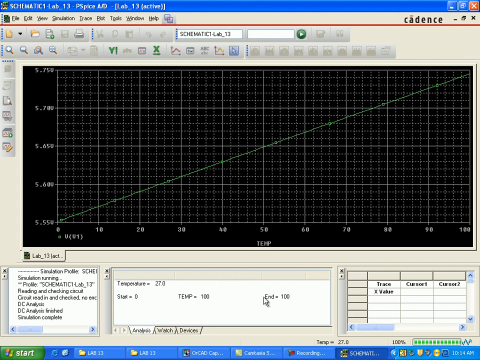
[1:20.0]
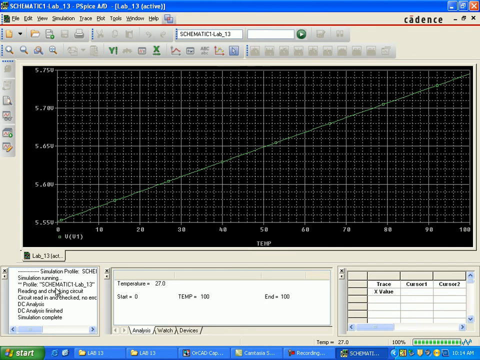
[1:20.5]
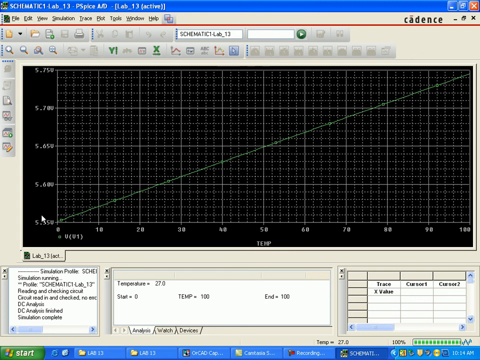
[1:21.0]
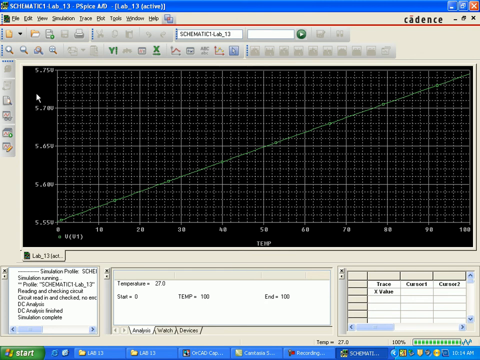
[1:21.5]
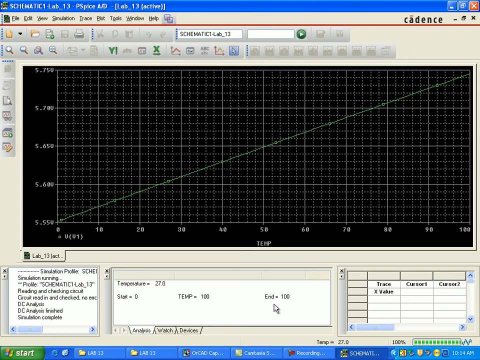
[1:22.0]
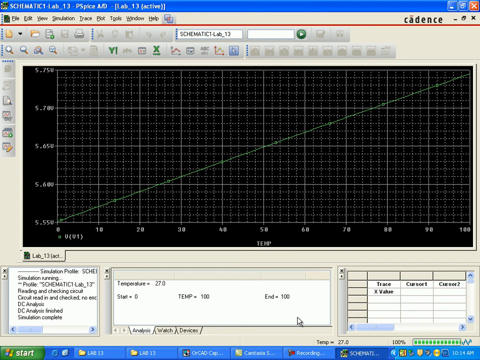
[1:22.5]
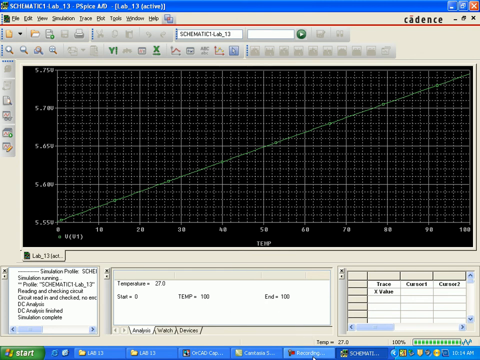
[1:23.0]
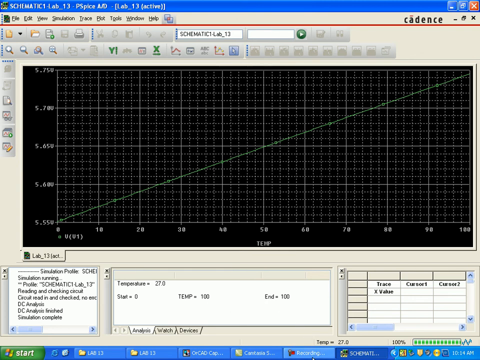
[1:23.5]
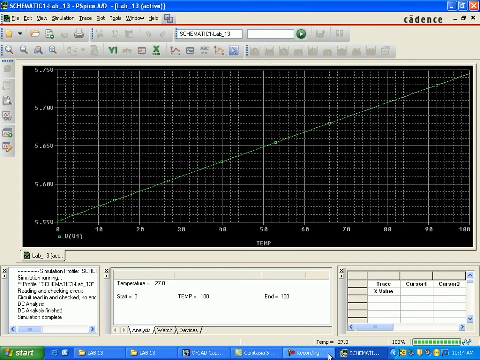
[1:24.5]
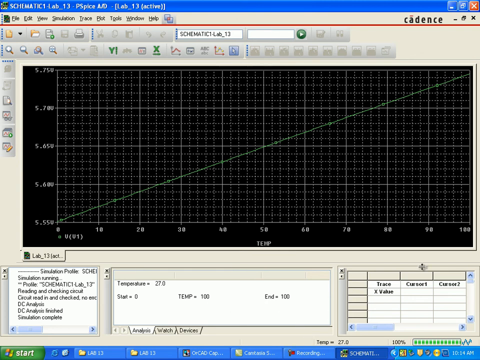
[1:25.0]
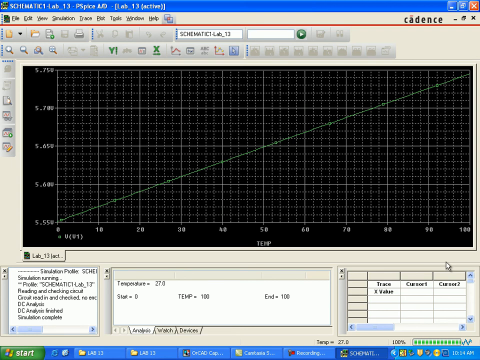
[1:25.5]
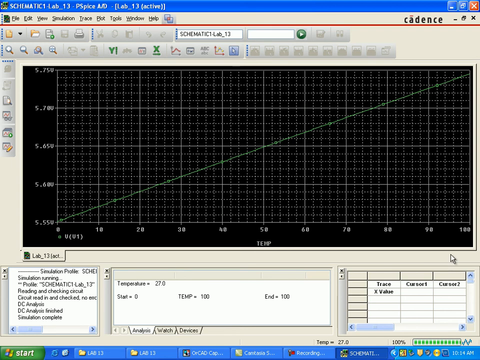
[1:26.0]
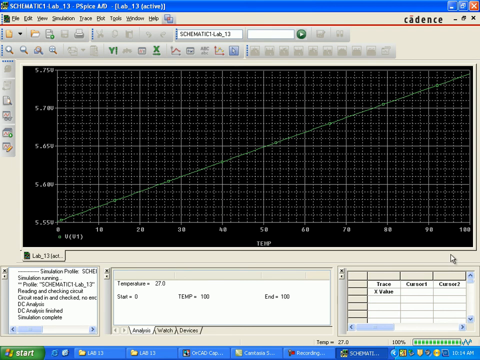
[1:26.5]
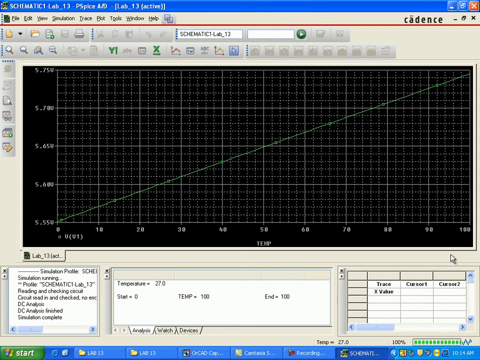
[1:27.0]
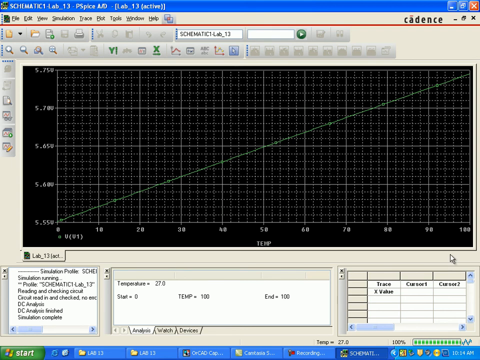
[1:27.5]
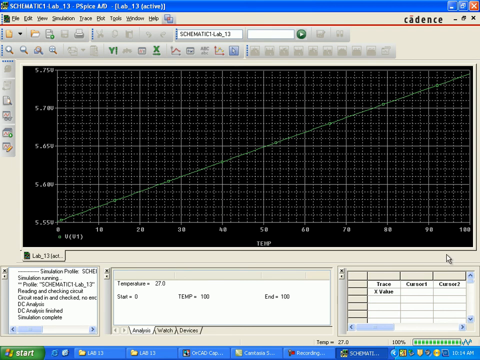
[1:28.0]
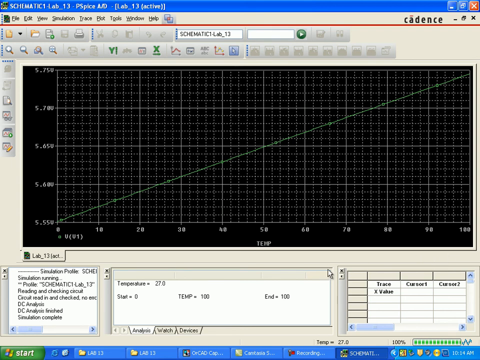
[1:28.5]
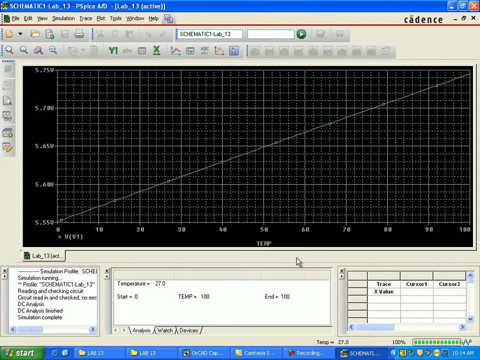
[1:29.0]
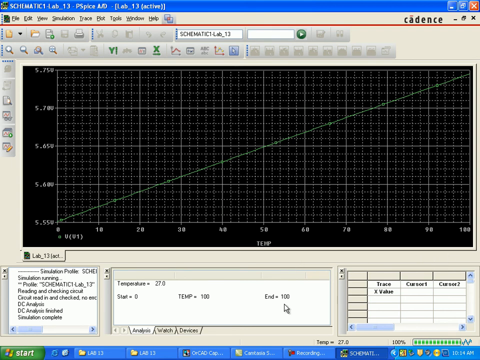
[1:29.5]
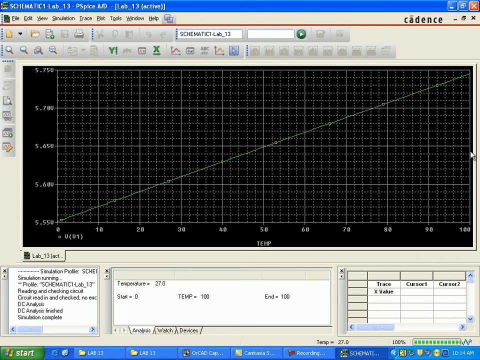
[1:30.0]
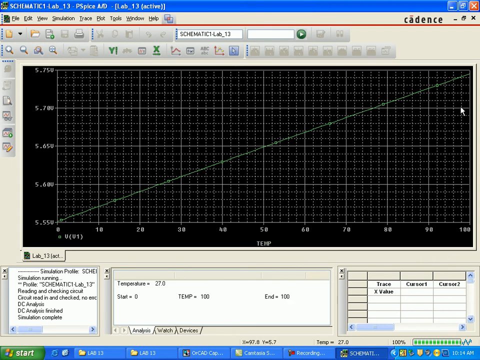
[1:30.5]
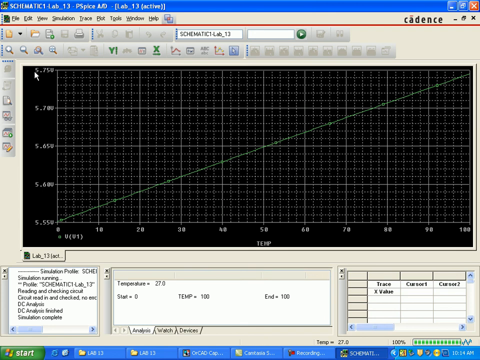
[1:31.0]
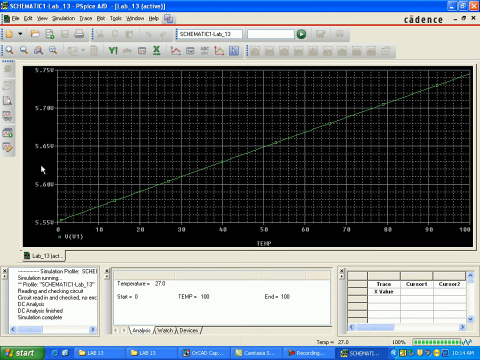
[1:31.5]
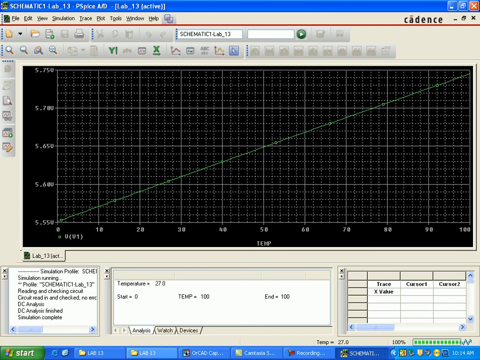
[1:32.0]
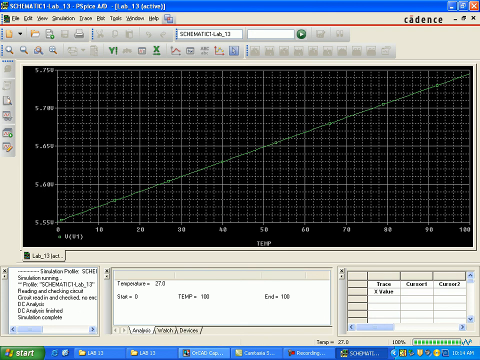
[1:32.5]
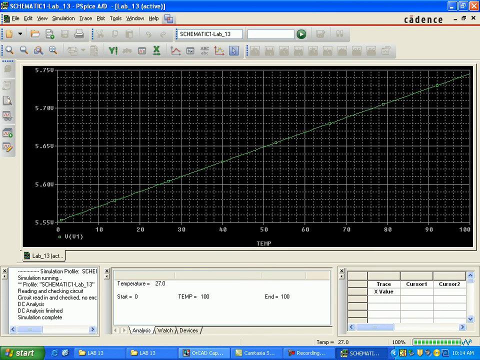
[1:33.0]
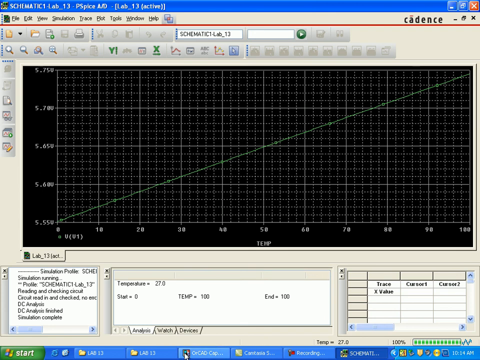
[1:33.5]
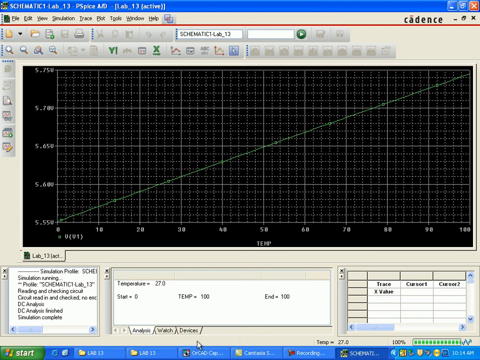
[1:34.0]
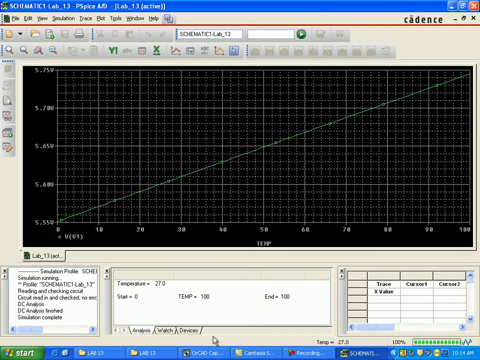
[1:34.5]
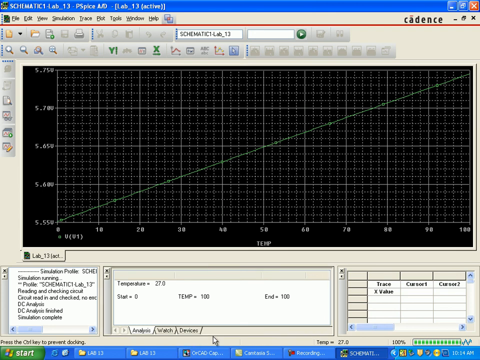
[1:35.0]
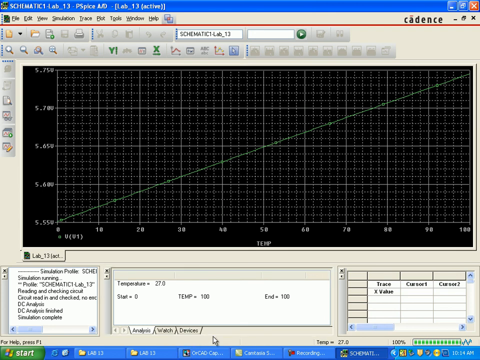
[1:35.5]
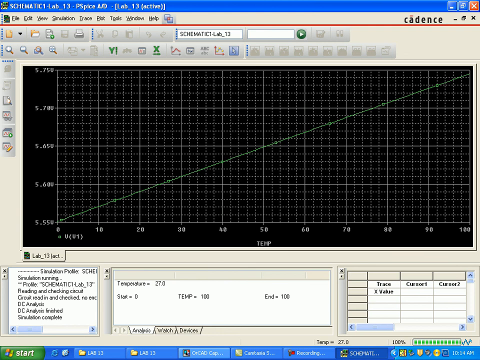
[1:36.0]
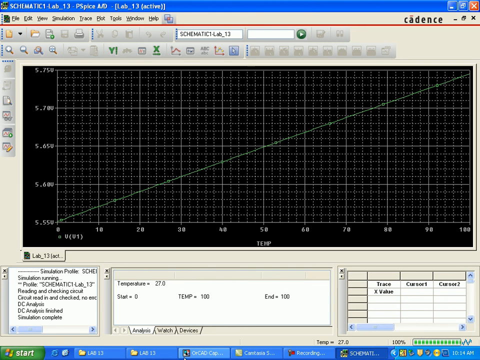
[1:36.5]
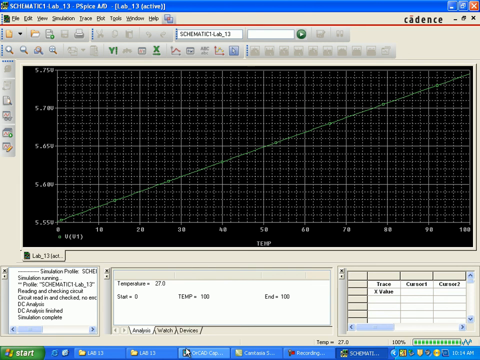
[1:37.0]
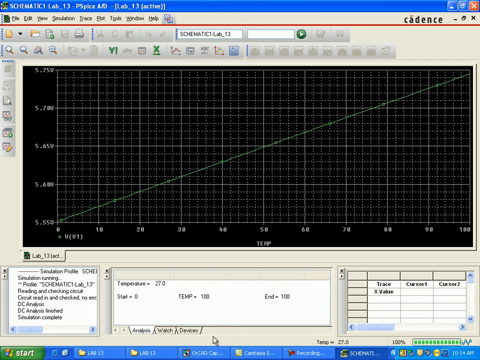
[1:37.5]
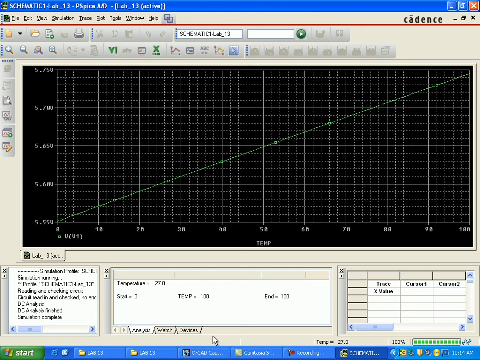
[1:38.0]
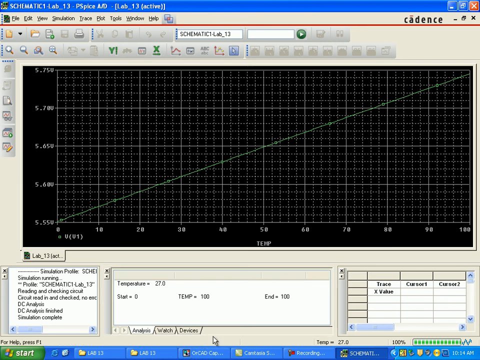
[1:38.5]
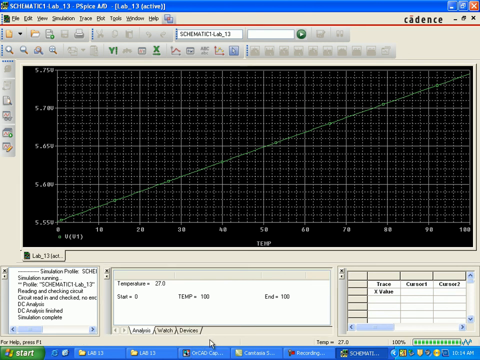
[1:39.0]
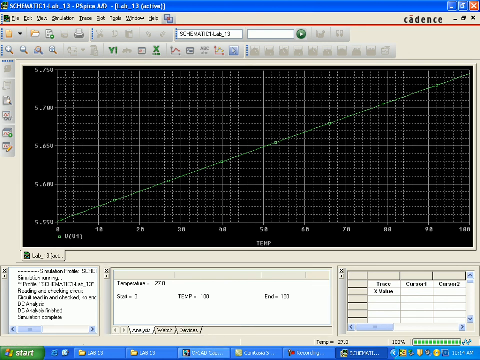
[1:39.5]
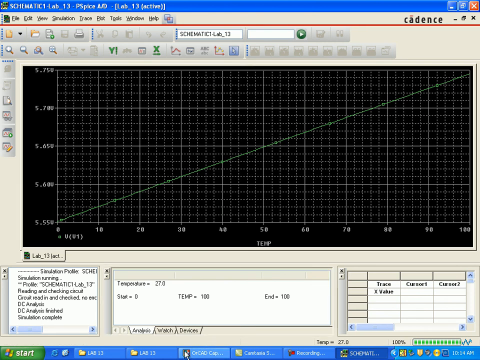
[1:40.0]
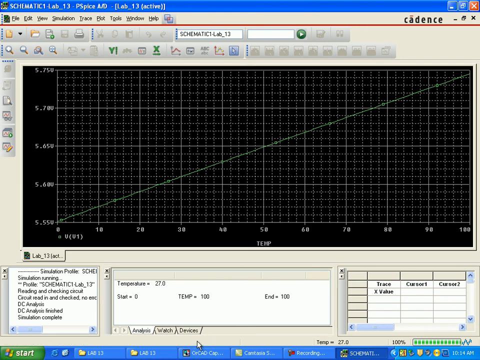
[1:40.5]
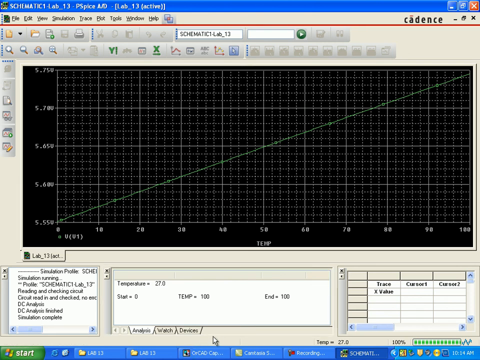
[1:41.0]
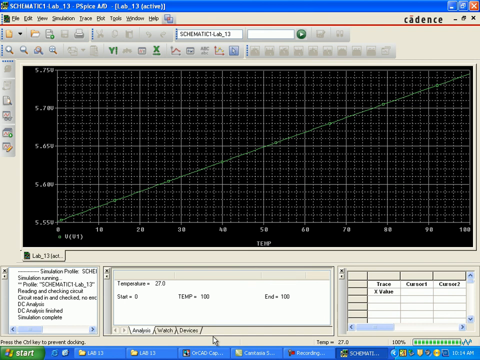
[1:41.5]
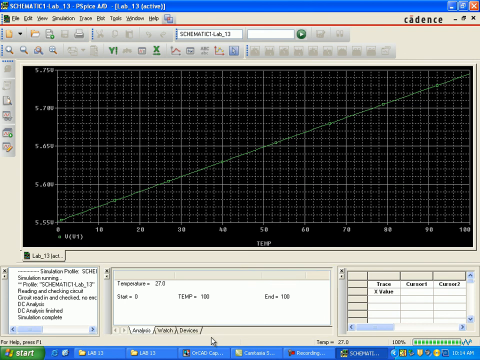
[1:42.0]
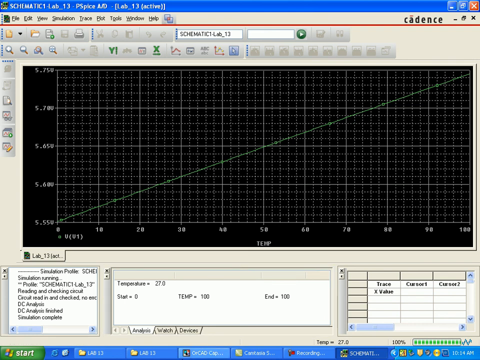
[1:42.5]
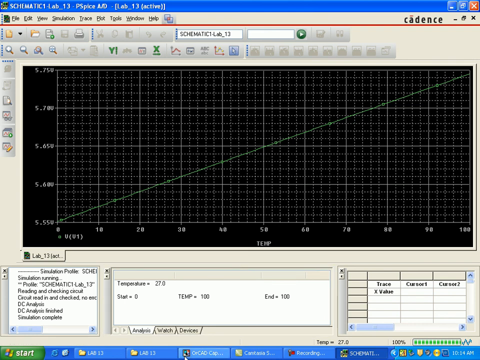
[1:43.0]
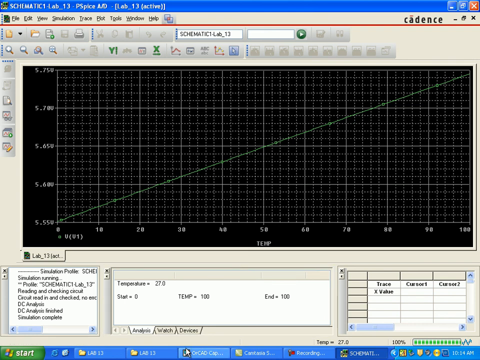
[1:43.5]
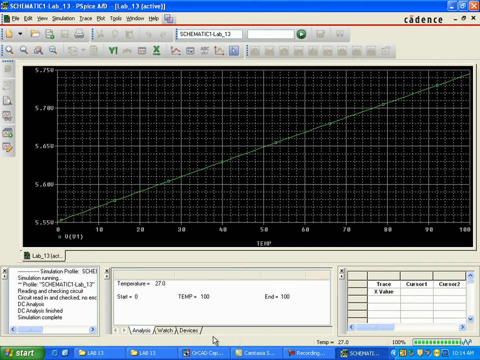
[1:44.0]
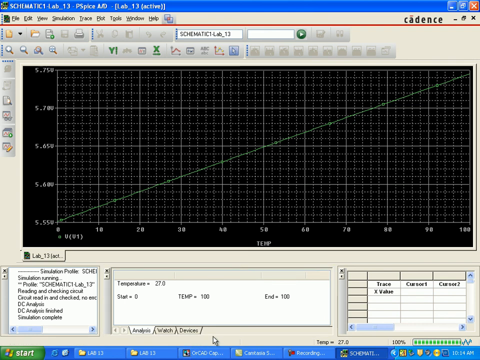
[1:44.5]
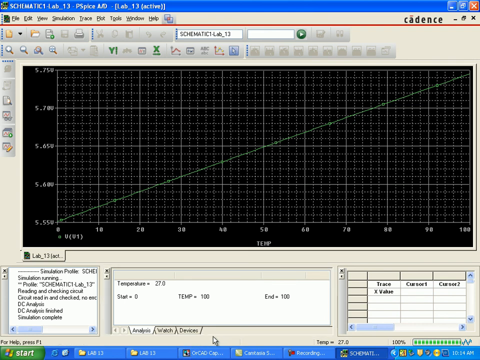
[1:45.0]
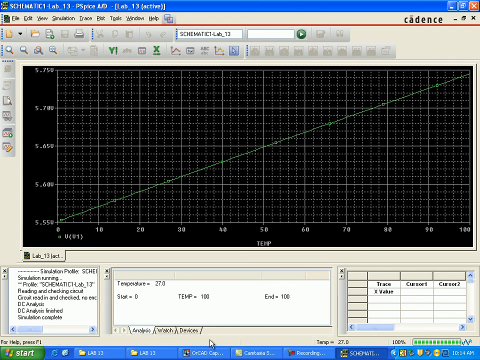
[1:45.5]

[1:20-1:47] The line graph remains on screen, still going steadily up and in the same position. The data table at the bottom right still says "Cursor 1", "Cursor 2", and "Trace". Under Trace it says "X value", while the rows below the other columns are all empty cells. The video seems to be a tutorial on how to create graphs like this in the program, apparently called Schematic. The window looks like a Windows 7 screen, with a blue top, a red X, a blue minimize button, and a blue full screen button.